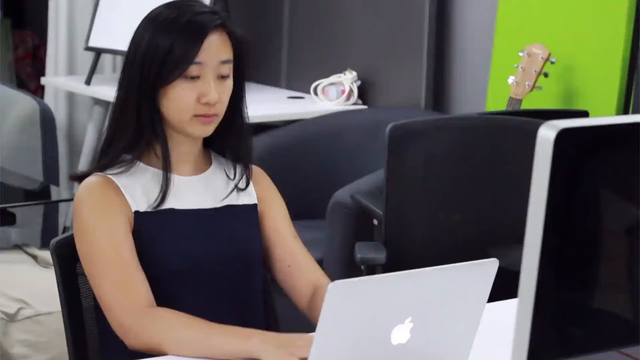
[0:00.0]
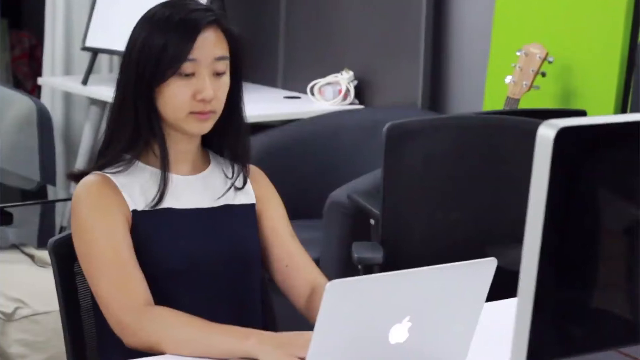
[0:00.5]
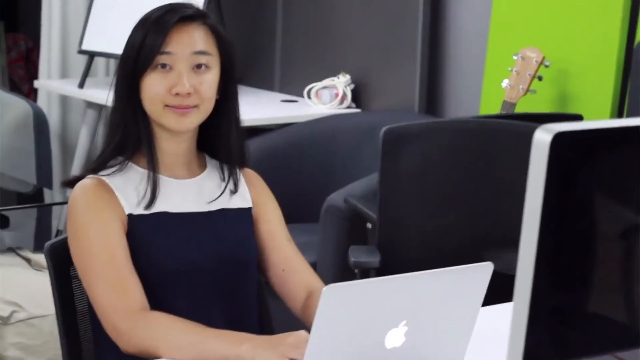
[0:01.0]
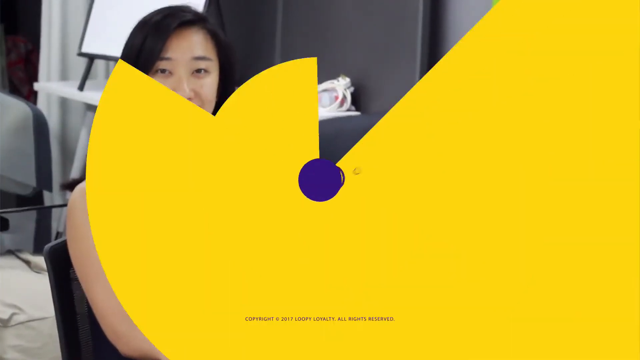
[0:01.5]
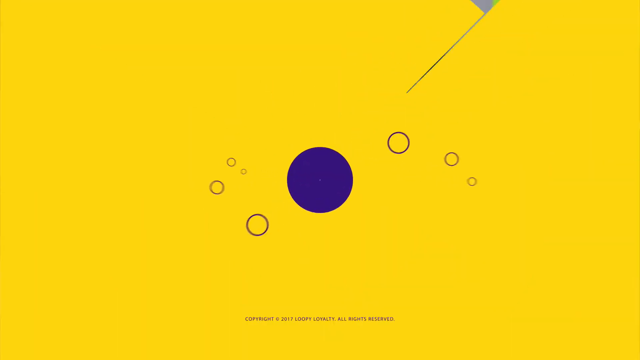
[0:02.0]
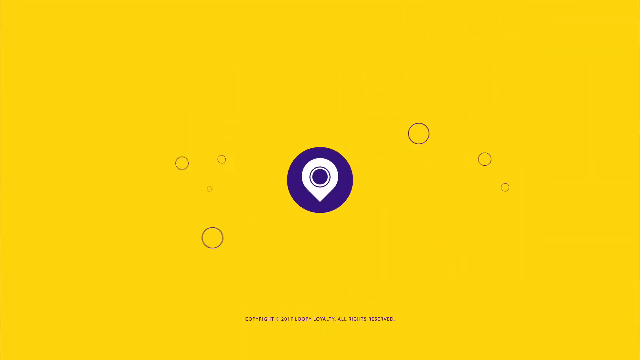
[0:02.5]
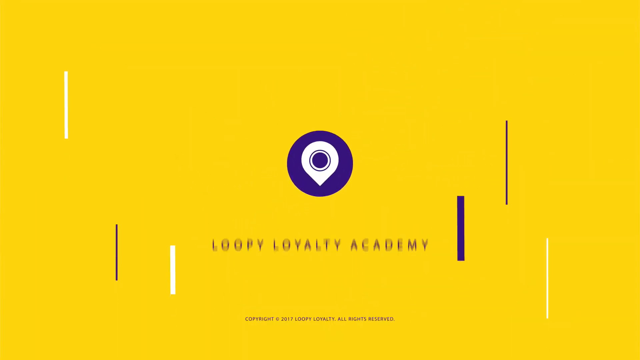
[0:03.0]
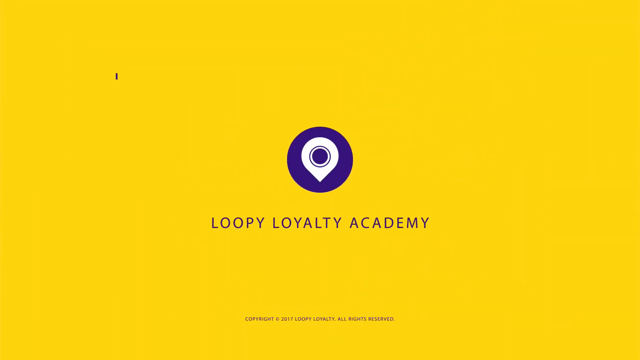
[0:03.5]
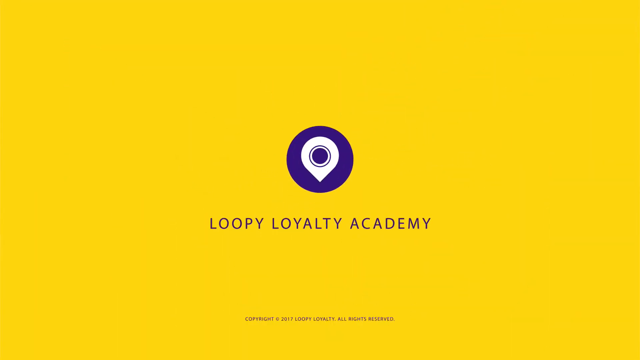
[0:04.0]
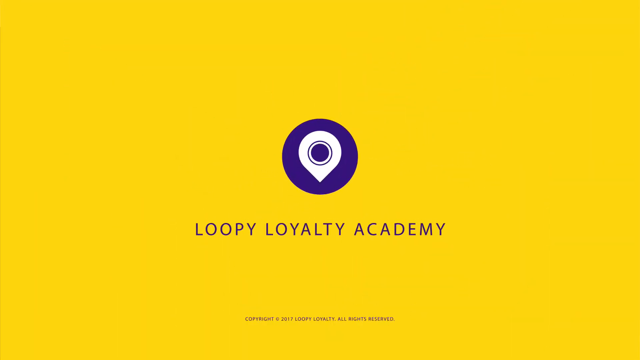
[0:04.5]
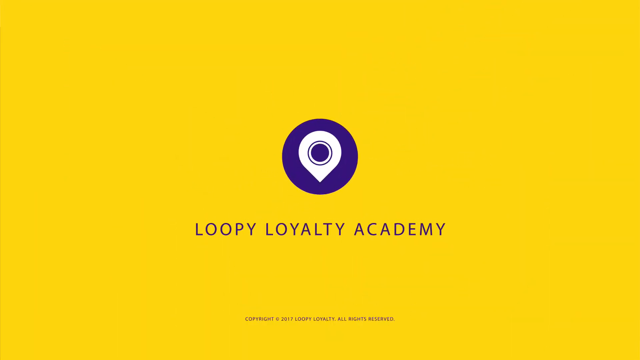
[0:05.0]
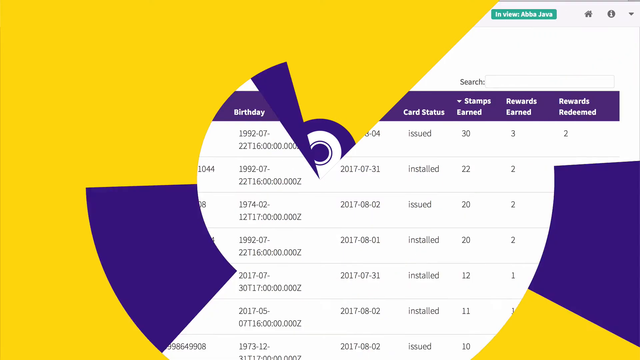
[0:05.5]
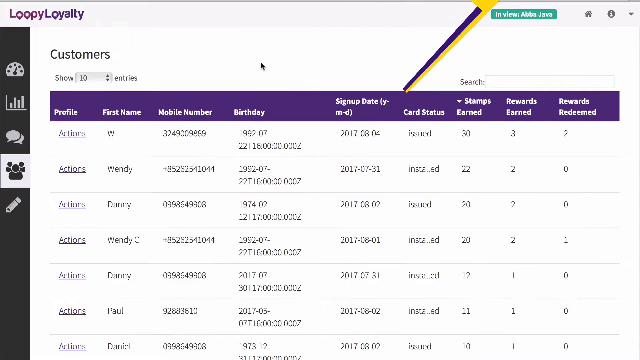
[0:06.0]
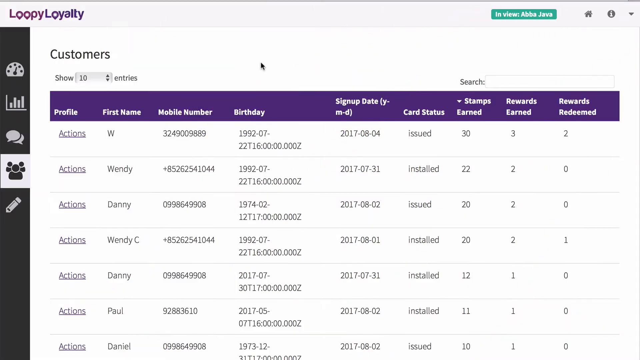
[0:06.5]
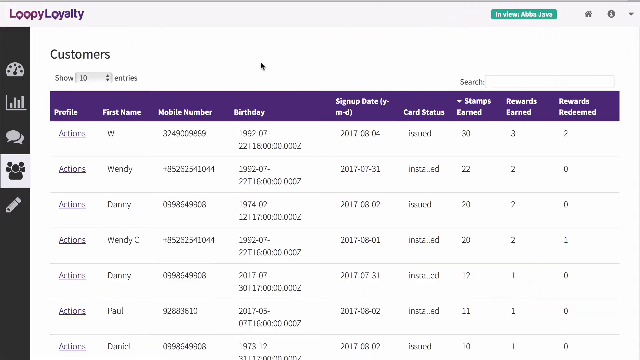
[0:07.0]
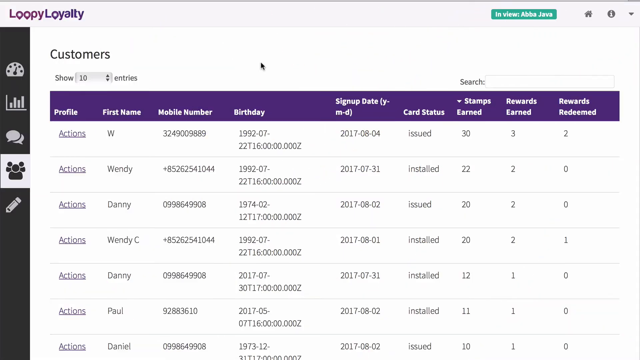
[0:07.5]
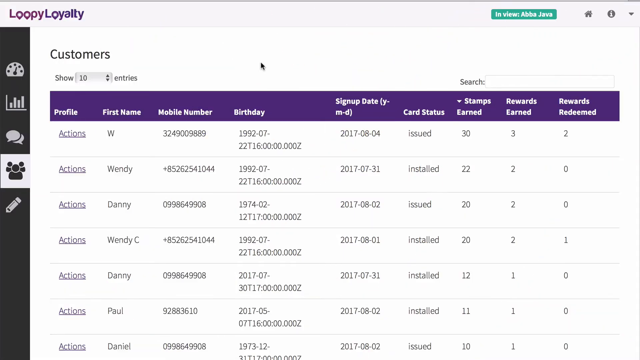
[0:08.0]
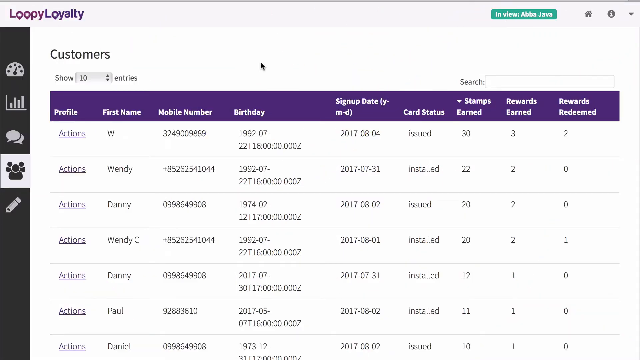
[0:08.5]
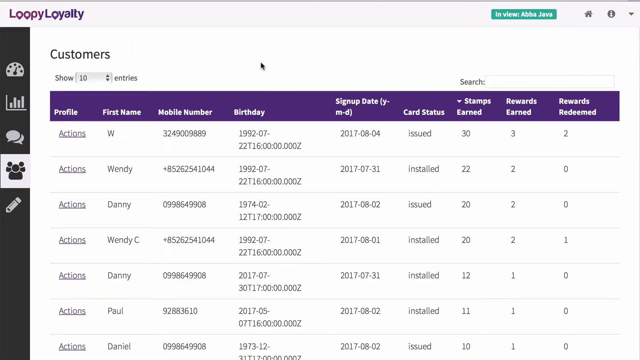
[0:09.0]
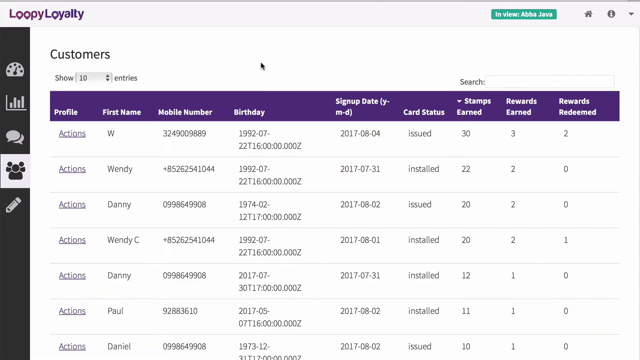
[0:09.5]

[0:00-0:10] An Asian woman is sitting in an office setting. The surroundings are white, grey and black, with a lime highlight on one section of the wall. She is sitting on a plastic chair, facing the camera and a silver-grey laptop. She first looks at the laptop screen, then looks up and smiles toward the camera. The screen then changes to a brand image: a bright yellow background with a blue logo in the middle, a round circle with a white pinpoint at its centre. Underneath, capital letters read "Loopy Loyalty Academy". The view zooms in on this, and then a spreadsheet appears with "Loopy Loyalty" in the top left corner and a list of customers in a database.